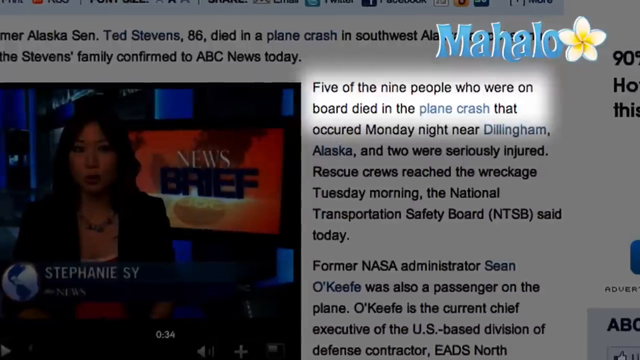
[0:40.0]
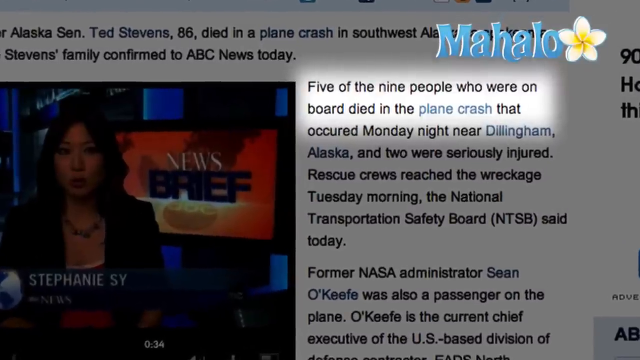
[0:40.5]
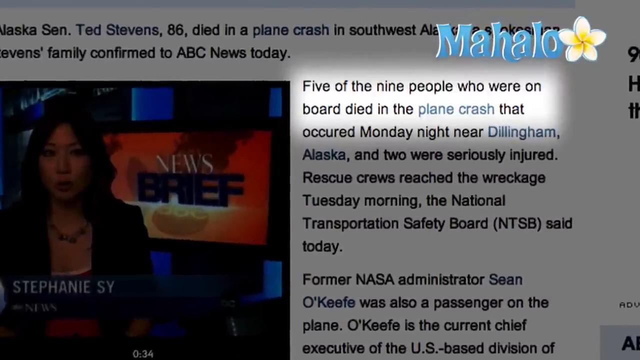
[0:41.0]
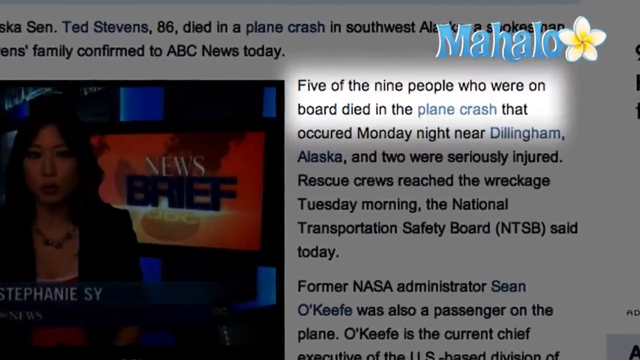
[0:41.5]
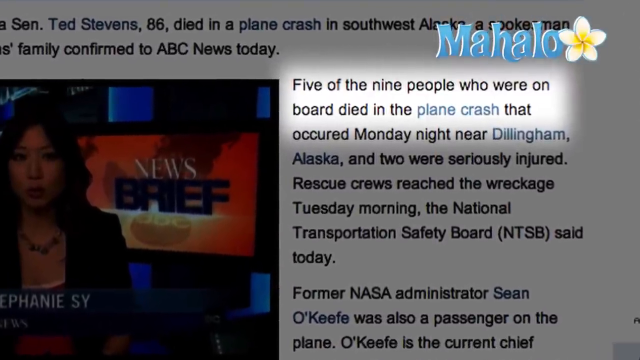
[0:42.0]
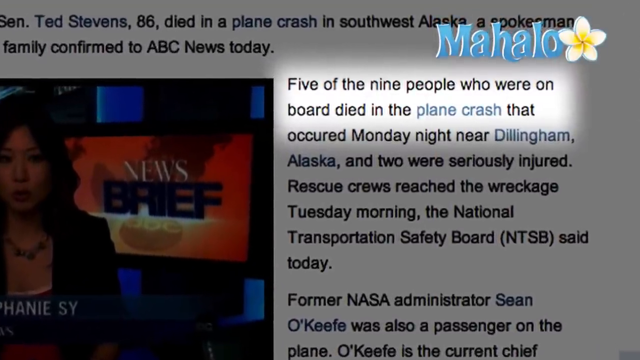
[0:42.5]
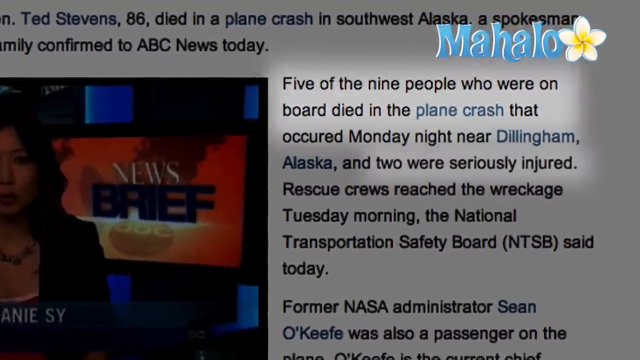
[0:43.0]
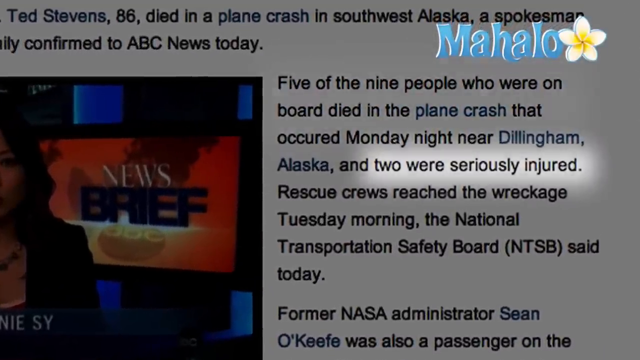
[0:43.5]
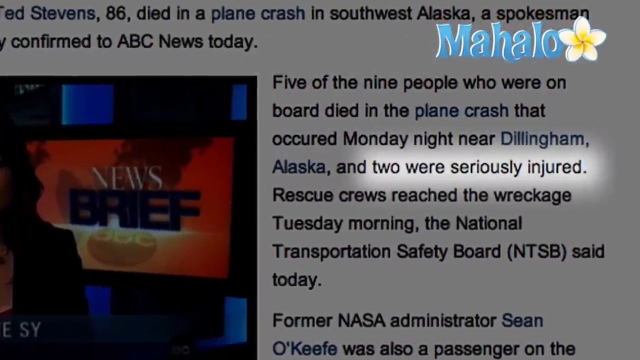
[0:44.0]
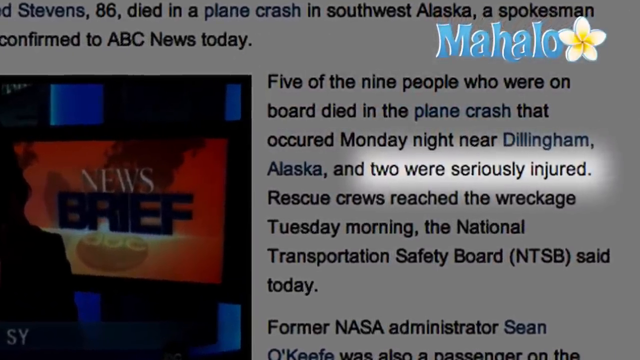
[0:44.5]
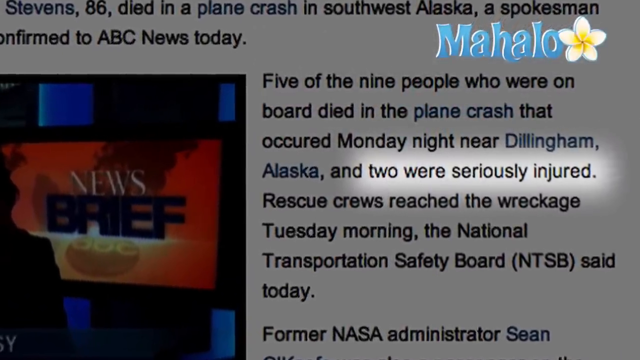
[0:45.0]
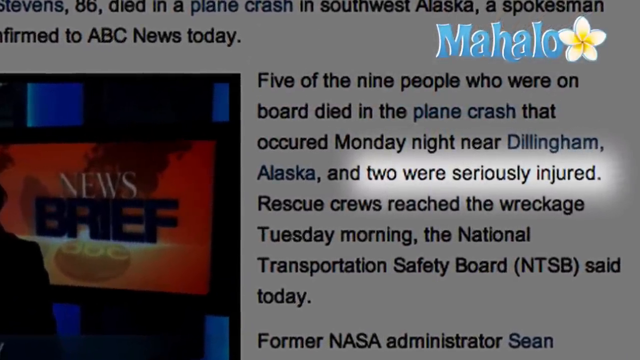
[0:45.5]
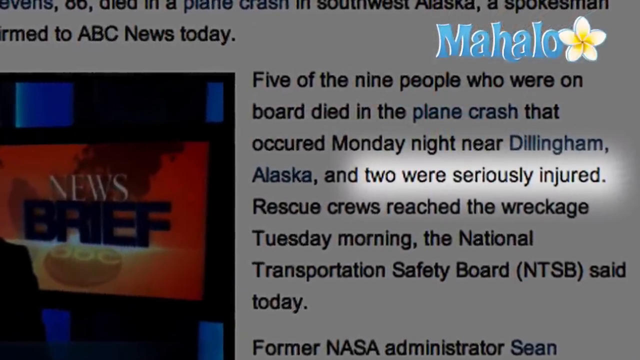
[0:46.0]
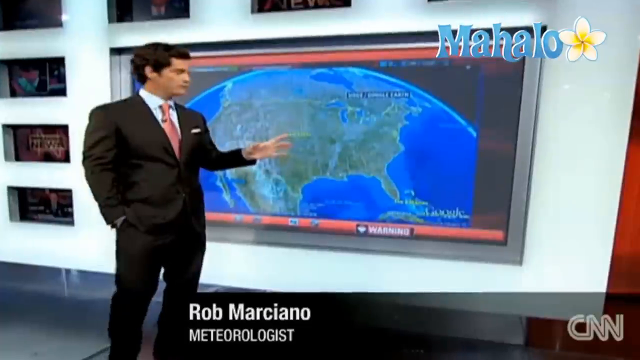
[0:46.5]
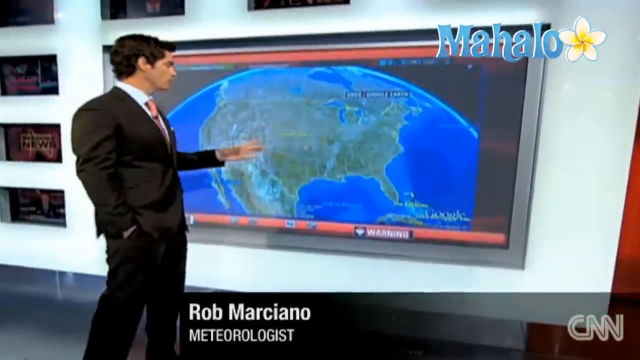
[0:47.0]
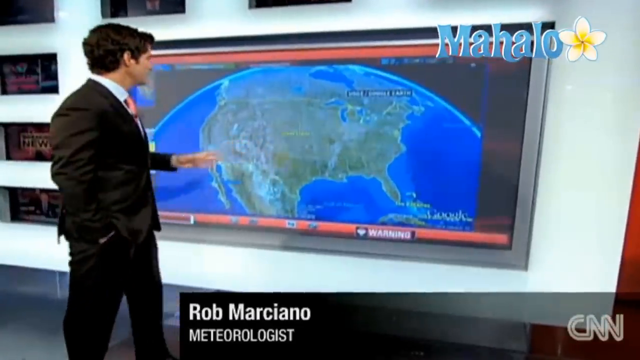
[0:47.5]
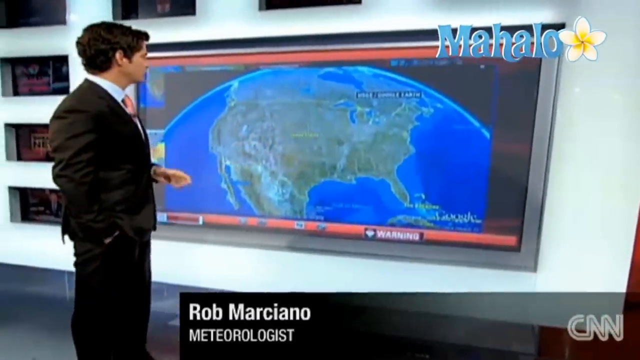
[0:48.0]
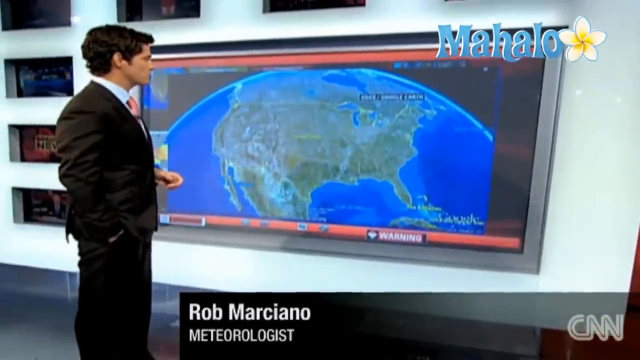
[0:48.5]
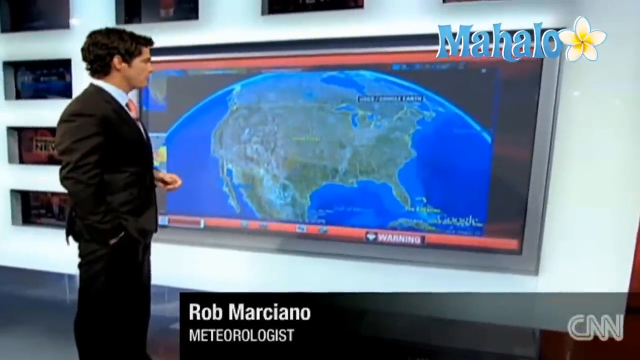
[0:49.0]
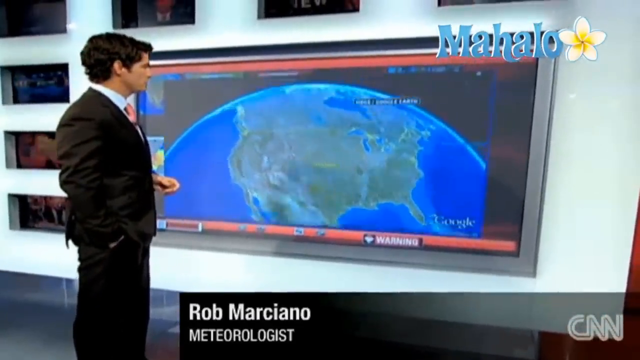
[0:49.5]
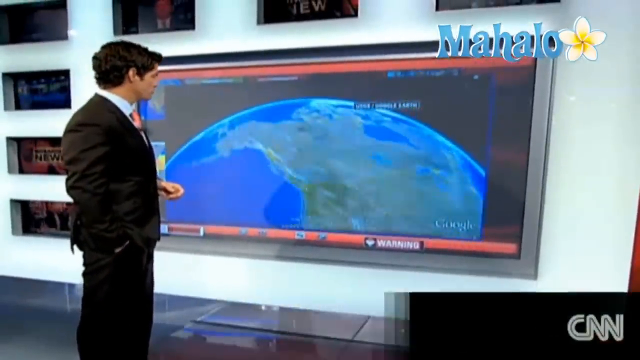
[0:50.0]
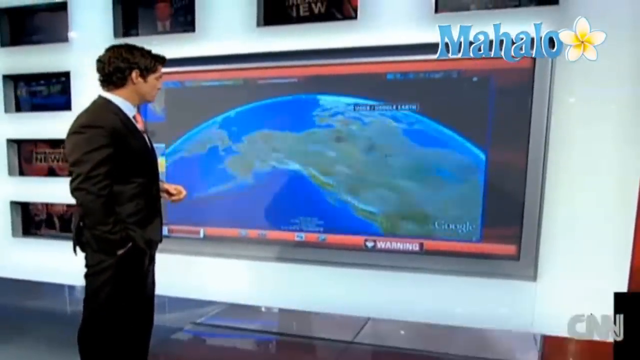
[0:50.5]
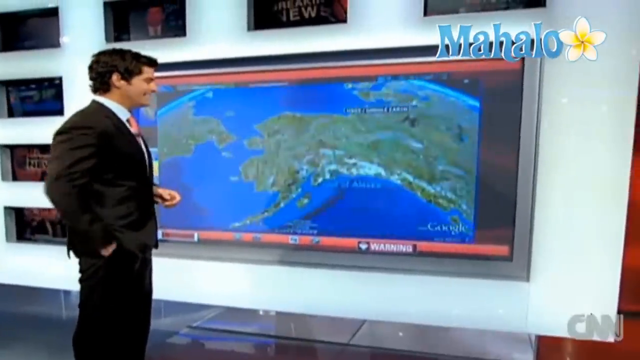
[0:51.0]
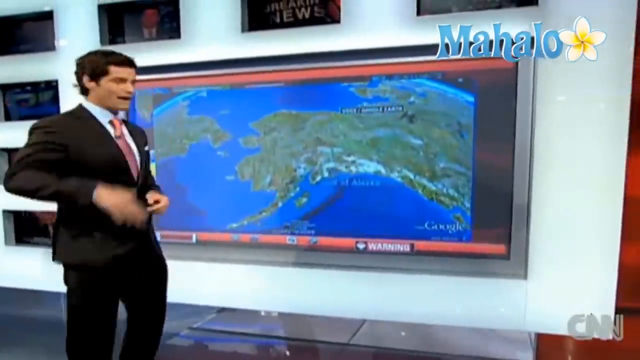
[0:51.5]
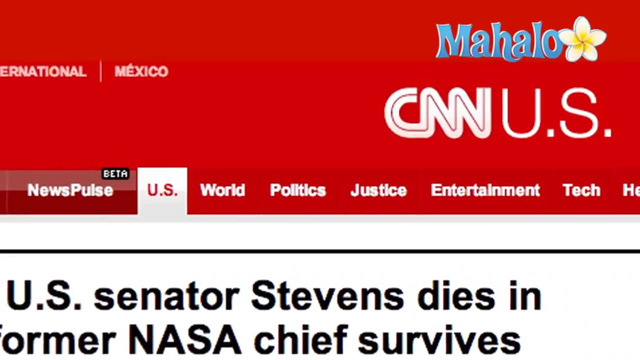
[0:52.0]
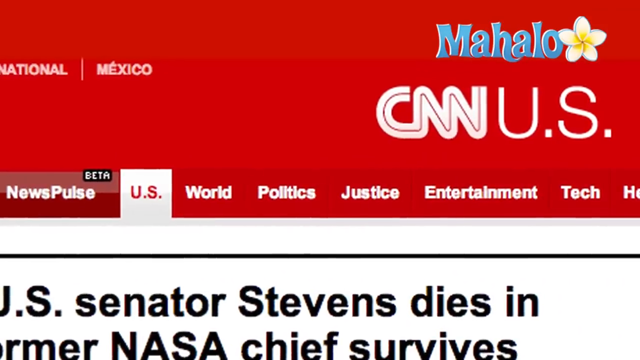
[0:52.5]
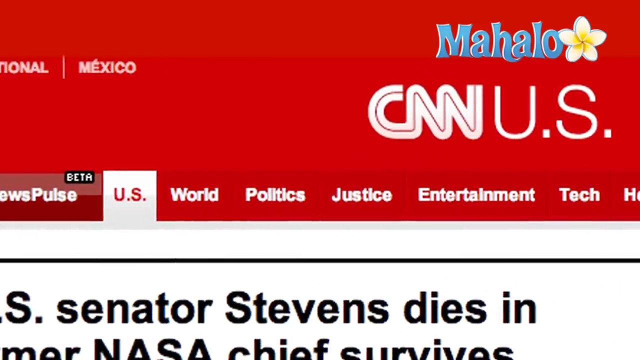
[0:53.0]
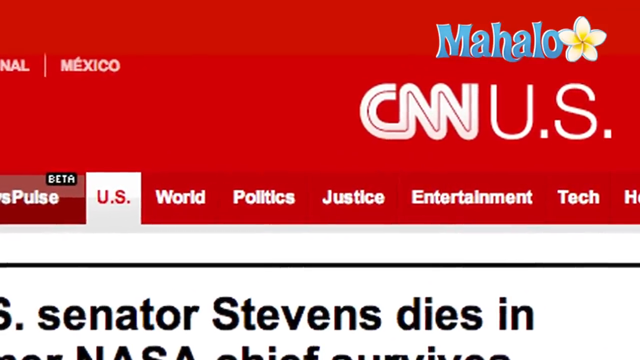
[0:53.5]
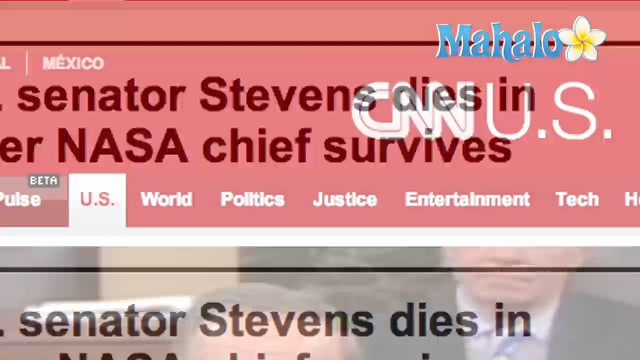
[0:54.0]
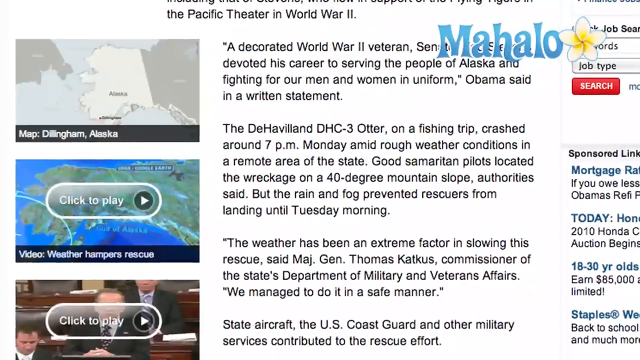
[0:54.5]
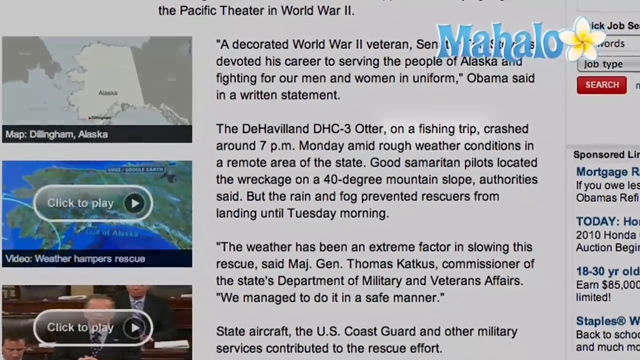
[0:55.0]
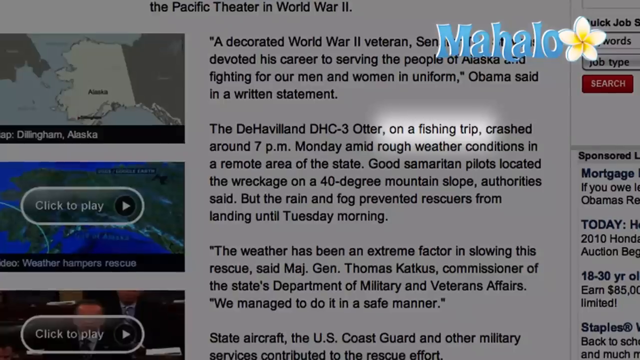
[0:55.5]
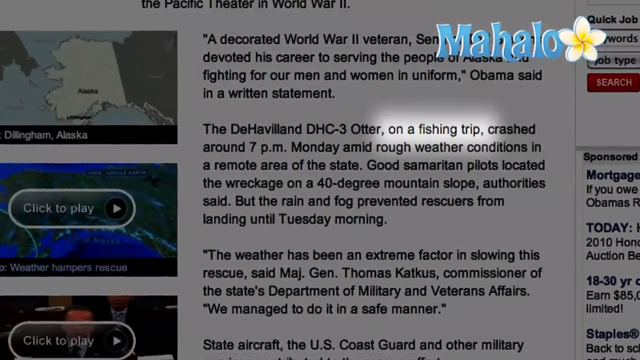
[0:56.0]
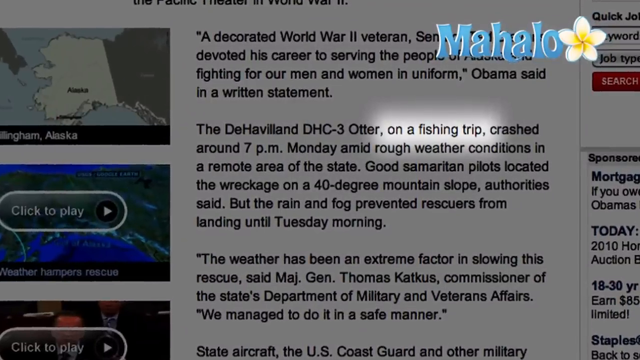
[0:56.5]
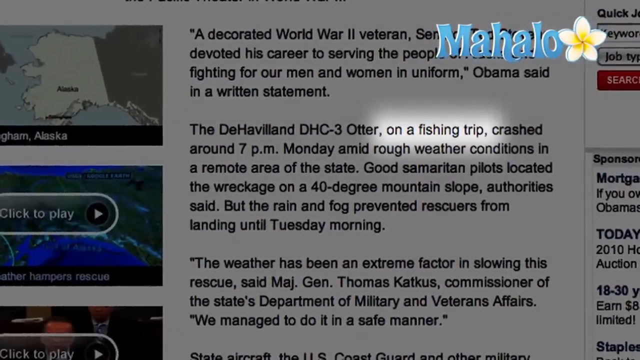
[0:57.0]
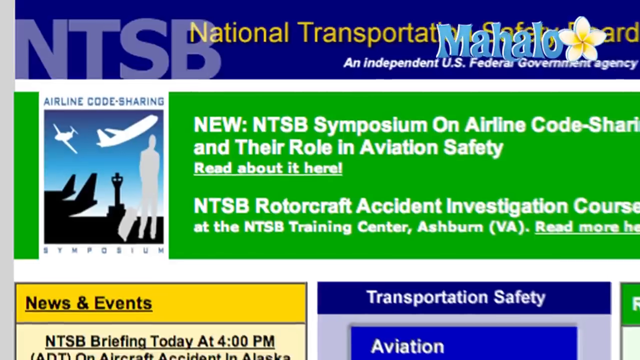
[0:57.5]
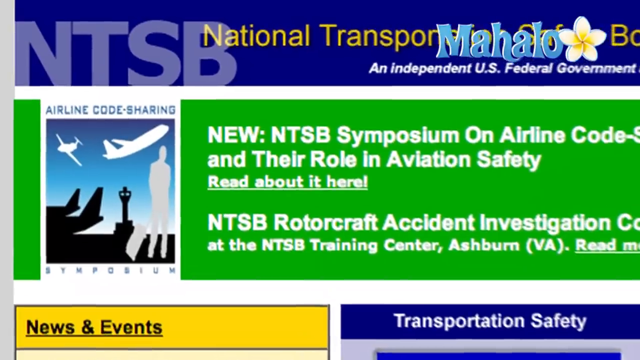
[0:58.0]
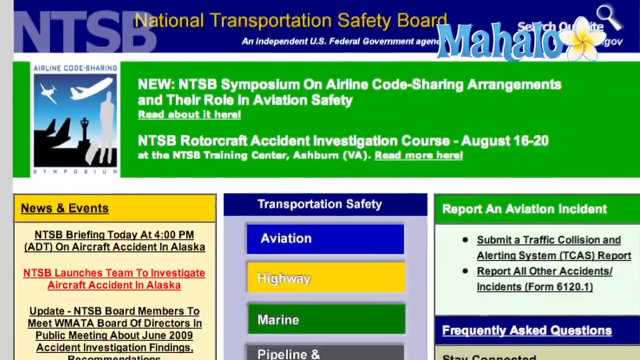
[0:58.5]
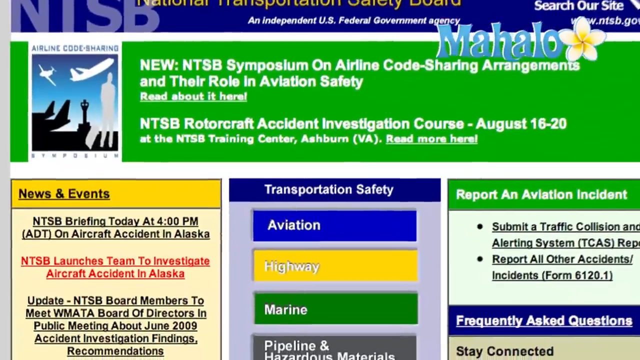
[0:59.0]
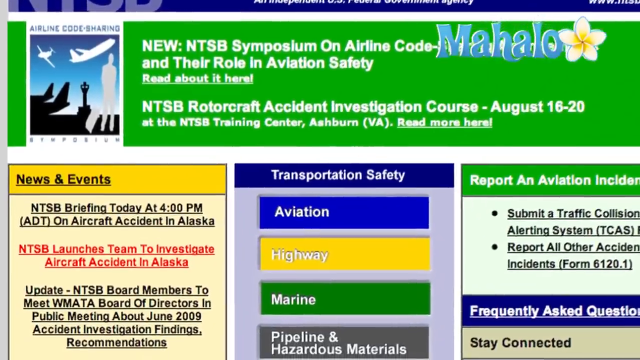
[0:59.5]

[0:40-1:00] An article on a web page is shown. The news article seems to center on a former Alaskan senator, Ted Stevens, reported to have been killed in a plane crash in southwestern Alaska, and seems to emphasize that five of the nine people on board died in the crash, which occurred on Monday night near Dillingham, Alaska. A young white meteorologist named Rob Marciano, formally dressed, appears with a big screen behind him showing satellite images of regions around Alaska where the accident occurred. Next comes the CNN webpage with a news article about Senator Stevens, followed by an NTSB webpage with information on recent news and events and transportation safety guidelines, among other things.